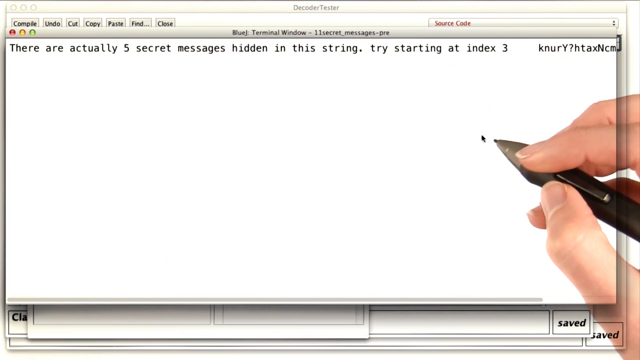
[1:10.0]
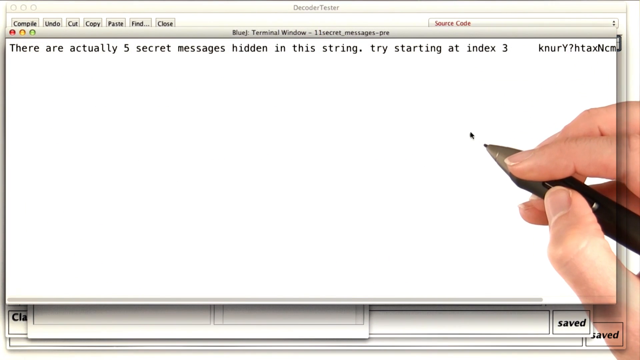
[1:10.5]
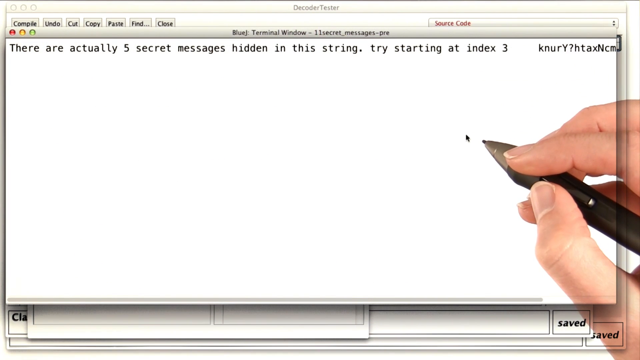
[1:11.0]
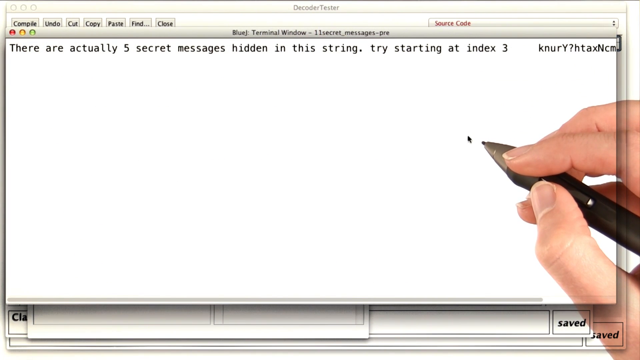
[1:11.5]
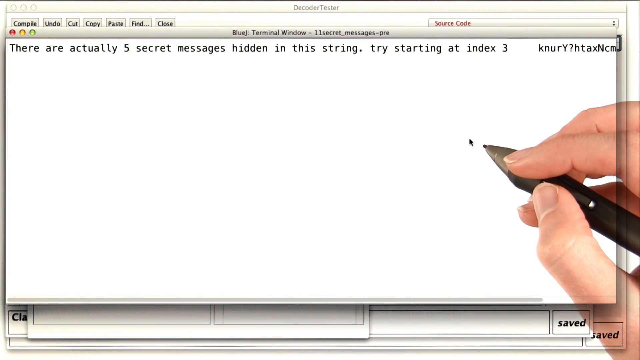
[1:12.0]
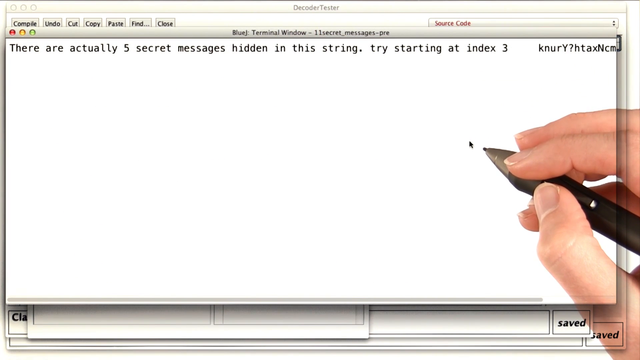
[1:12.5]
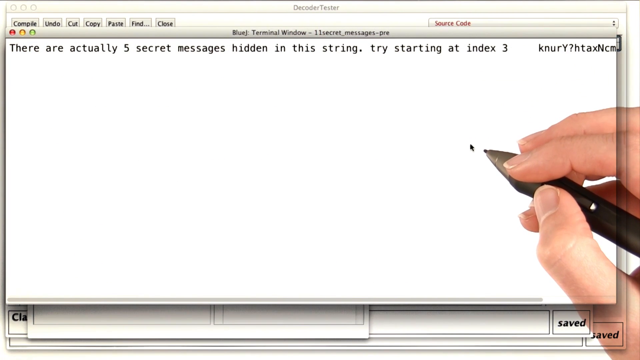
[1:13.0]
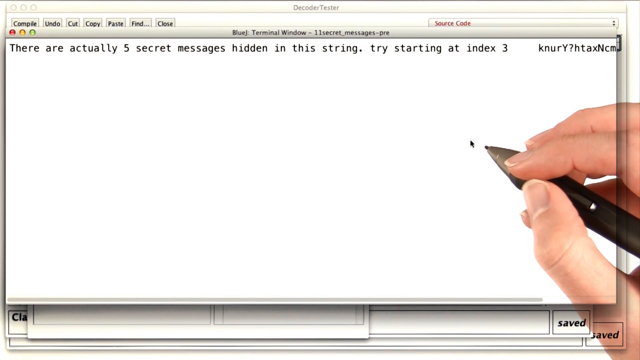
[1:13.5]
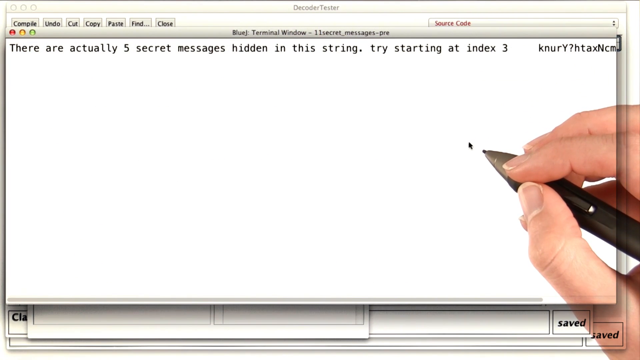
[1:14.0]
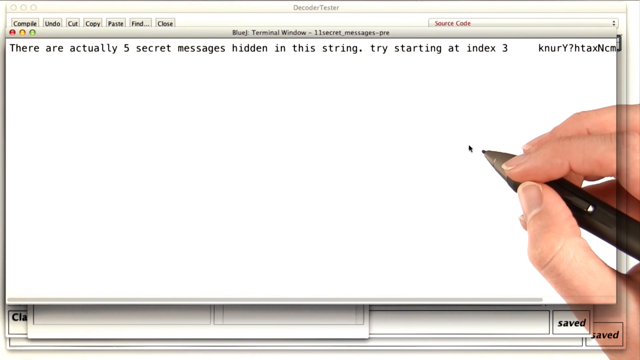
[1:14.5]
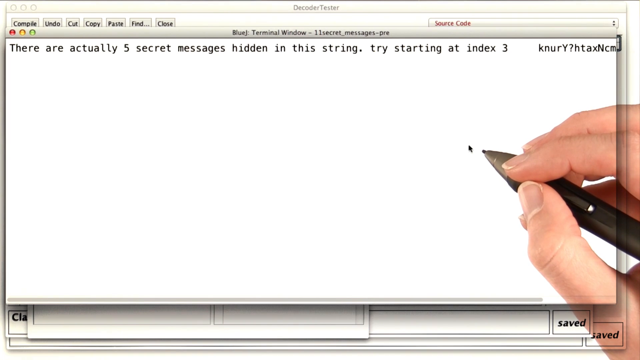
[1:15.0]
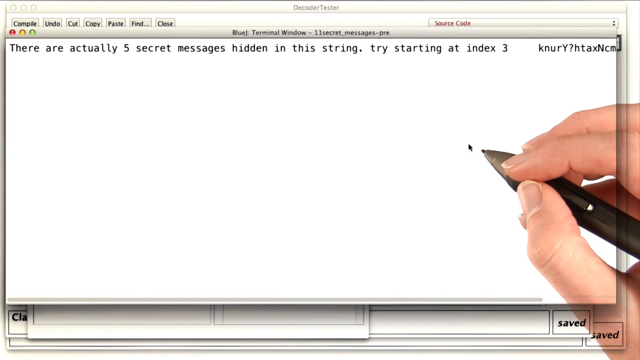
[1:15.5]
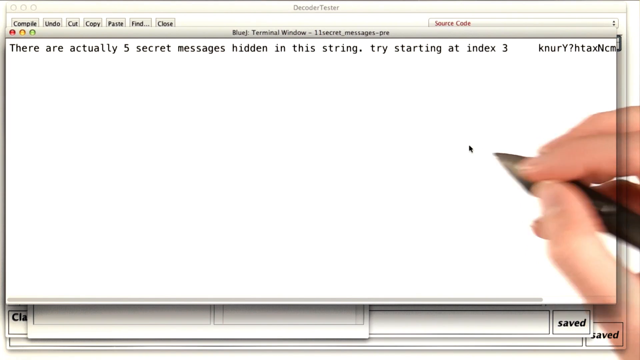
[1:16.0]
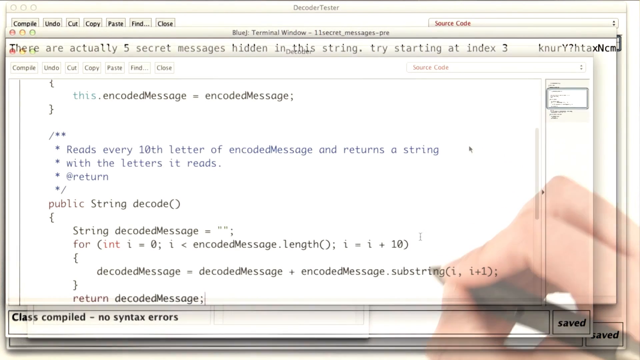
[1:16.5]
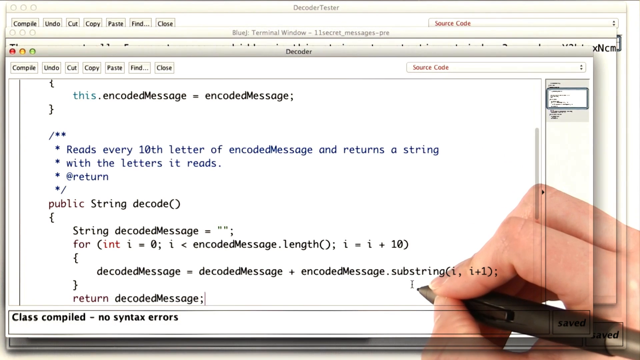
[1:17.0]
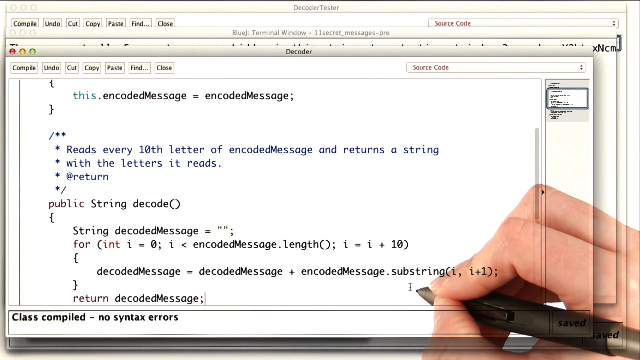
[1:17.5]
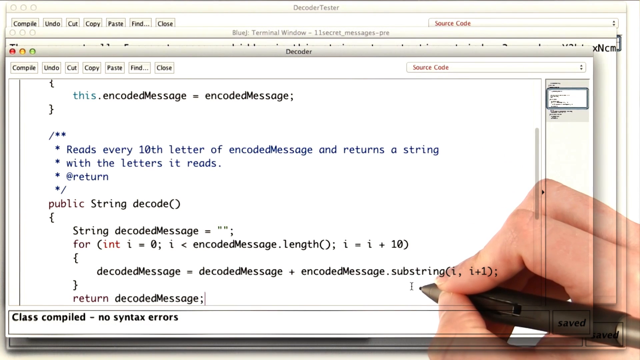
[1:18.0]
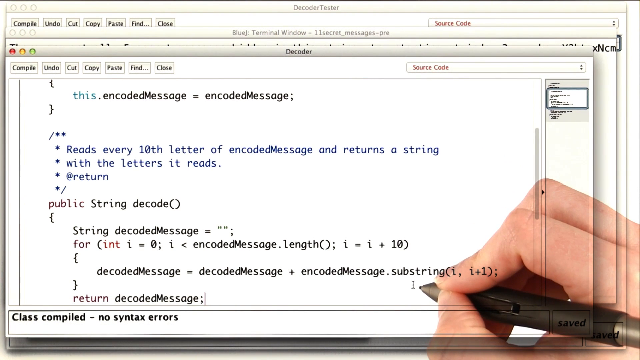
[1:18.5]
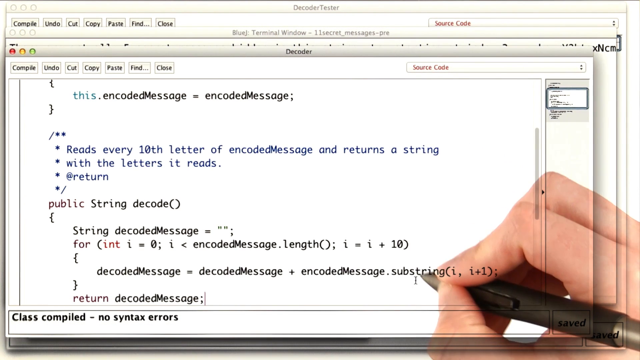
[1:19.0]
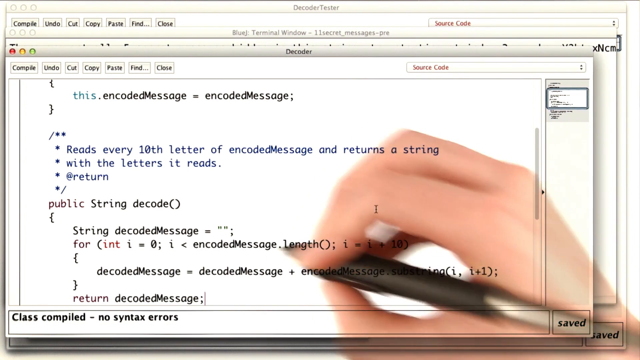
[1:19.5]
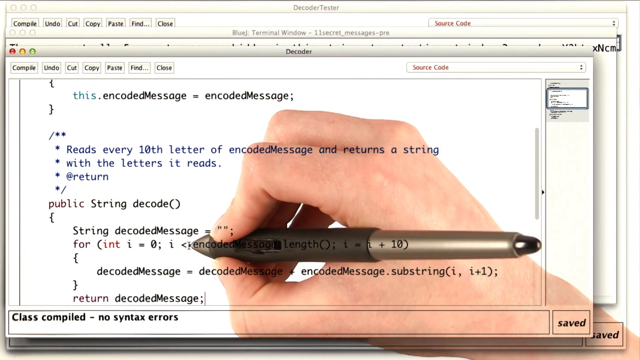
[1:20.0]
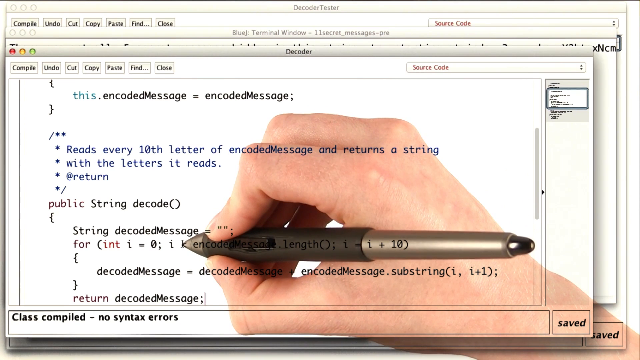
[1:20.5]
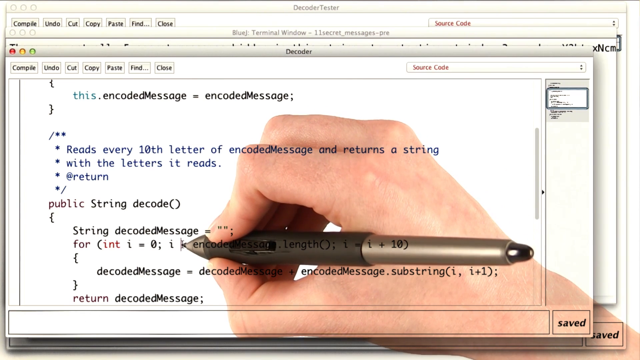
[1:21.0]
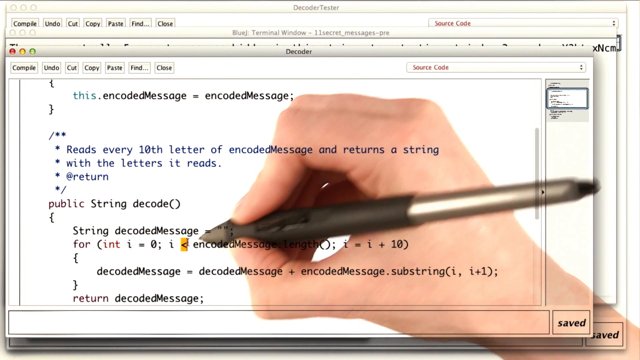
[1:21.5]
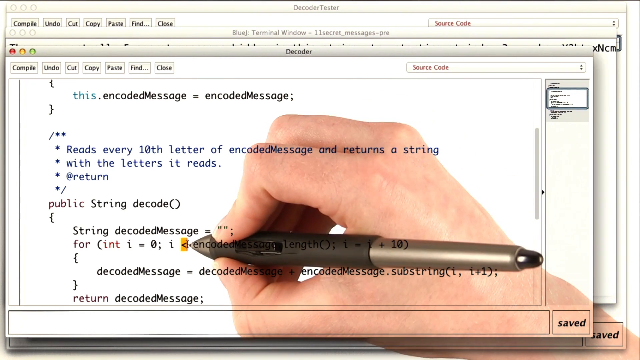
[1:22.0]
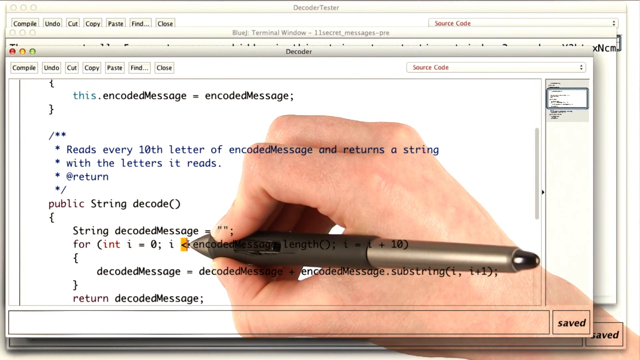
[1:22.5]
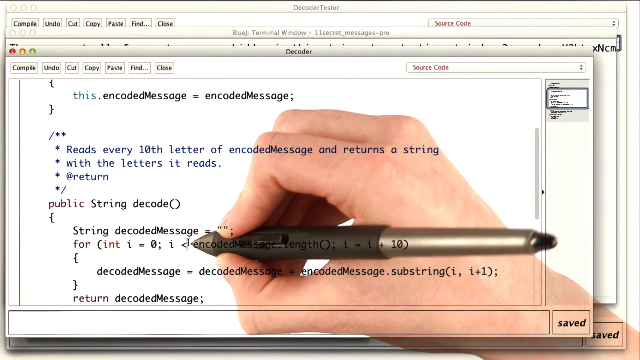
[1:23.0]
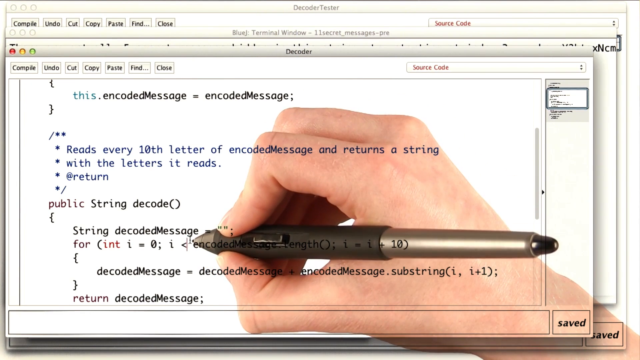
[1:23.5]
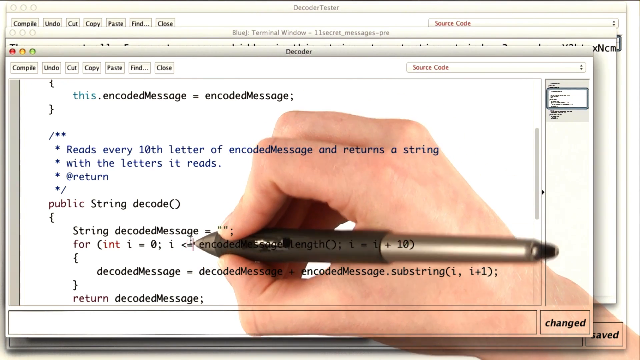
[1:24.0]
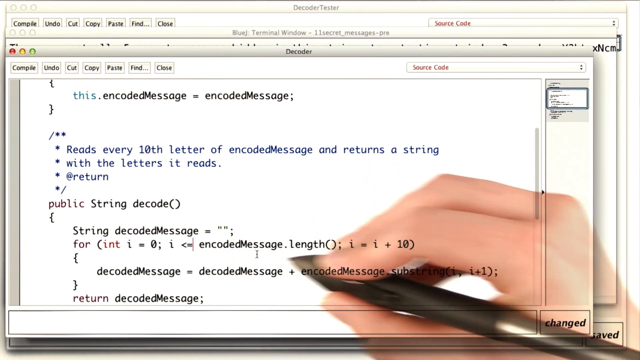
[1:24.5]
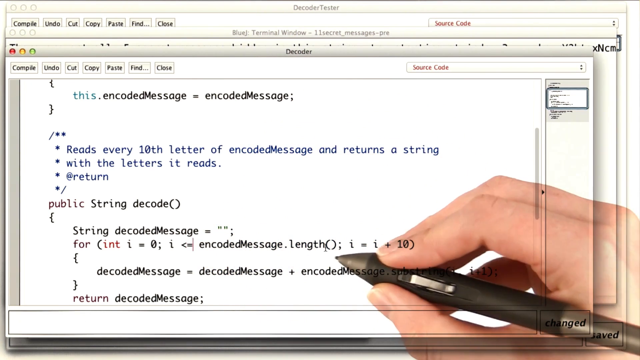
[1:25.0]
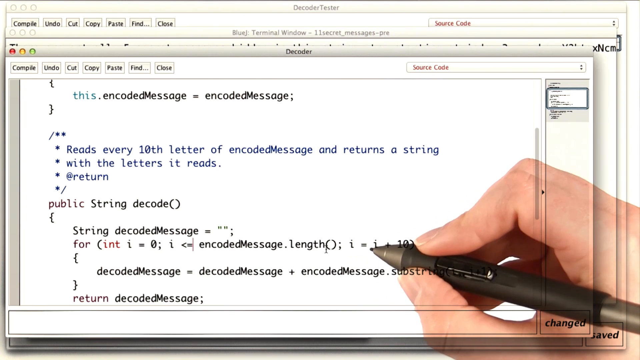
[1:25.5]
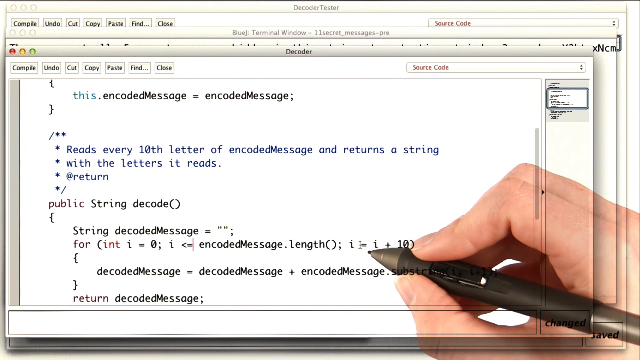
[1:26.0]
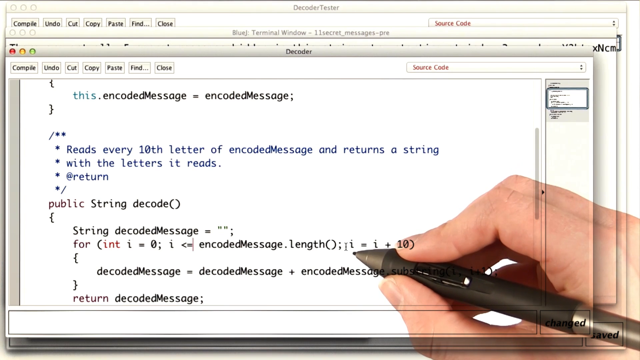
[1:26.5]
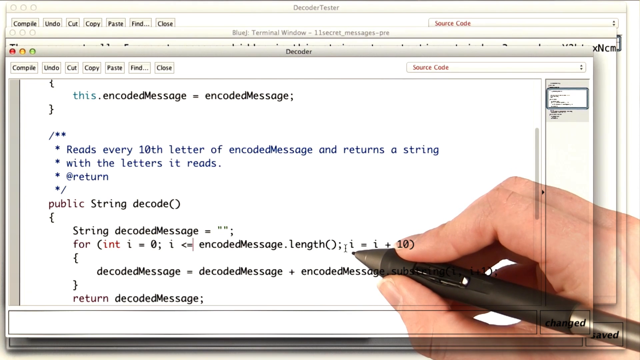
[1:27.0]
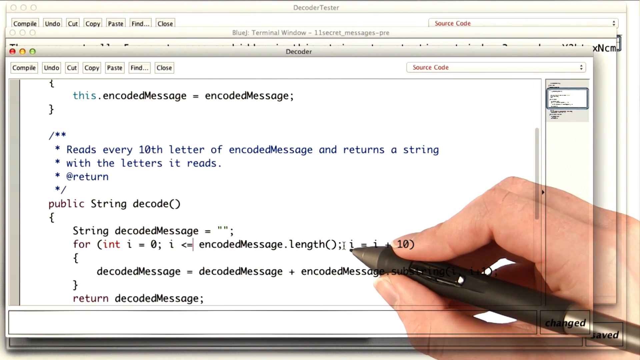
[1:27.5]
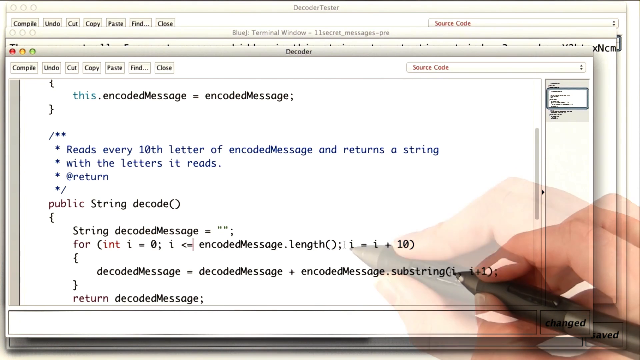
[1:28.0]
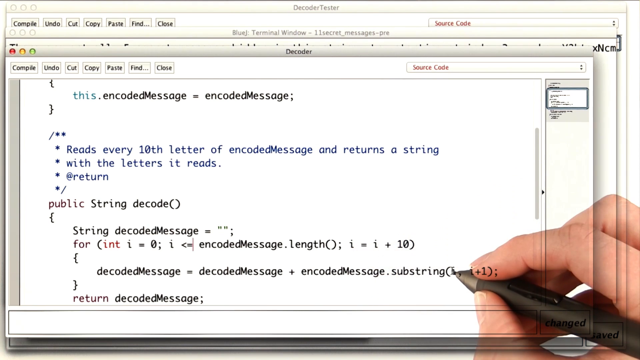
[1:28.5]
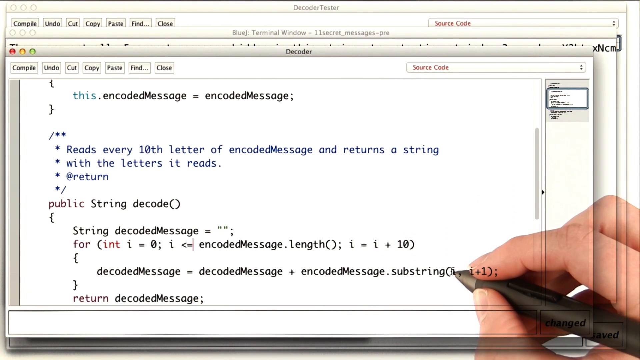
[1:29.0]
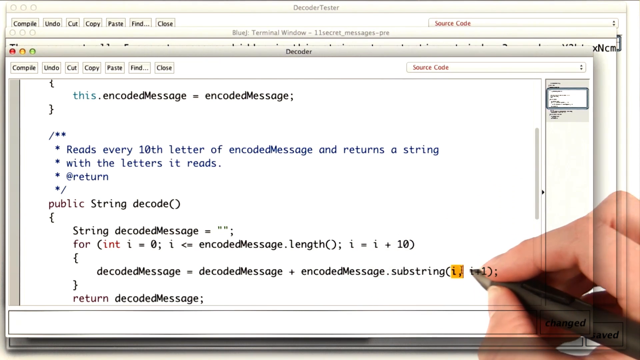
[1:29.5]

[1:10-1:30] The new page stays on screen; at the top it says "terminal window" and "There are actually five secret messages hidden in the string, try starting at index three." That is the only line at the top of the page, and the page is blank after it. The video then cuts to the decoder page, where the person has added "return decoded message". They highlight one of the characters and add an equal sign next to it, then move to another version of the text and highlight "i comma i plus one". The person appears to be trying to encode or decode a message with the decoder pages and decoder tester they have open. The hand holding the pen and making all the changes is pale-skinned.